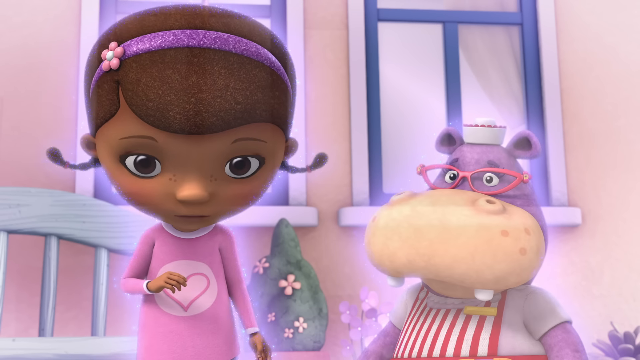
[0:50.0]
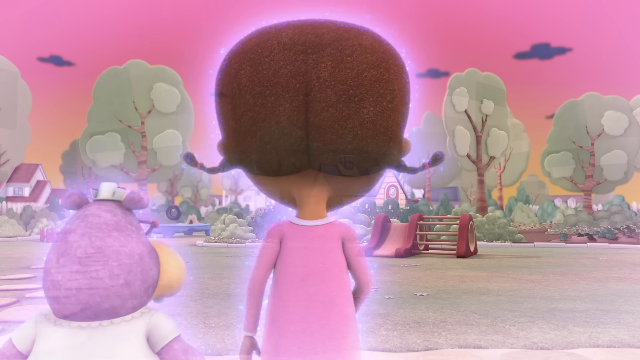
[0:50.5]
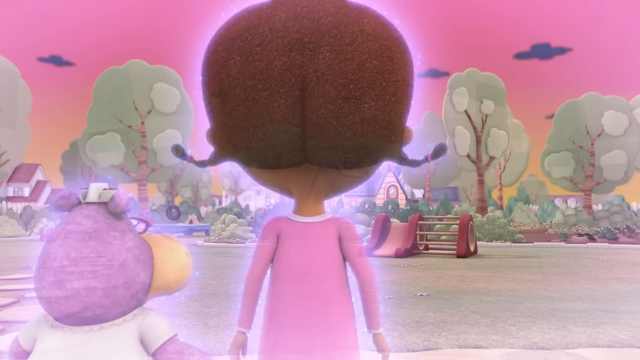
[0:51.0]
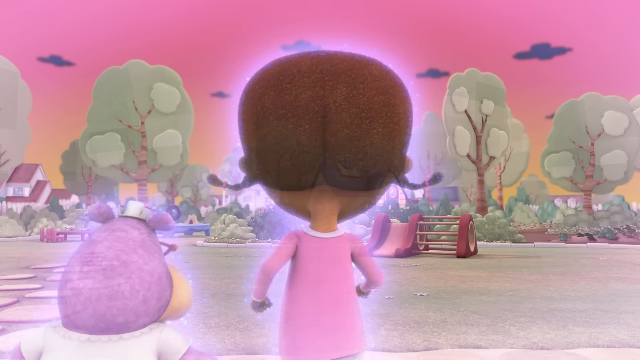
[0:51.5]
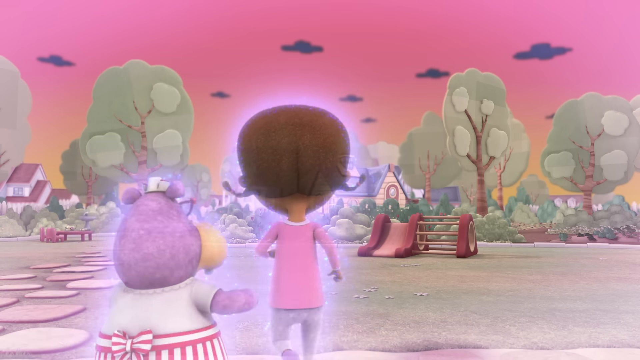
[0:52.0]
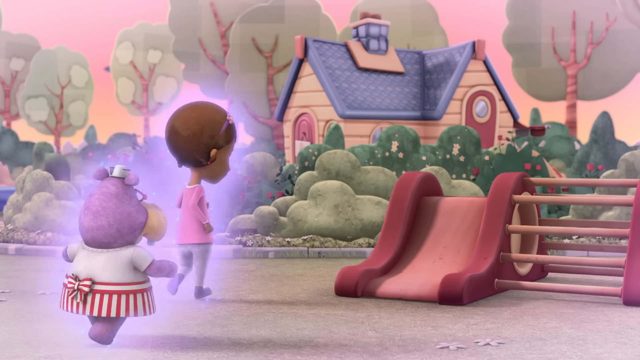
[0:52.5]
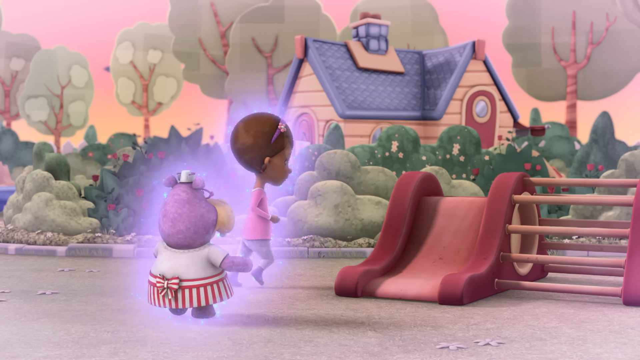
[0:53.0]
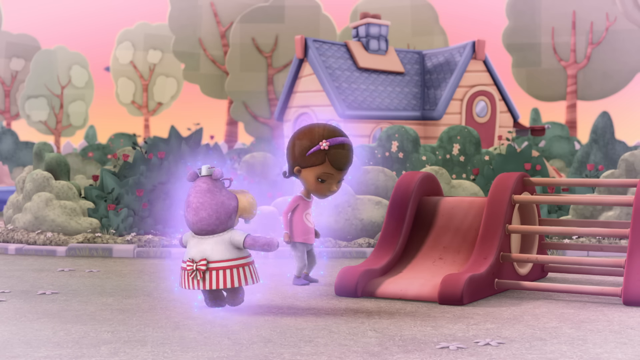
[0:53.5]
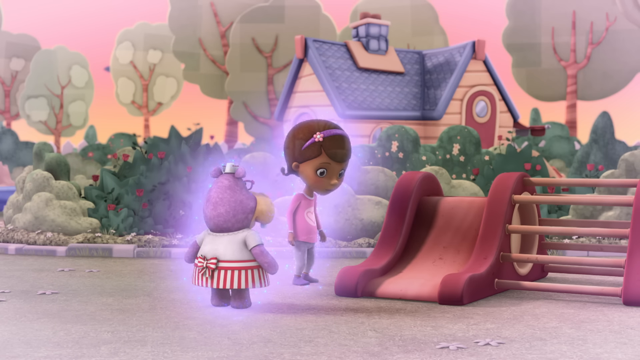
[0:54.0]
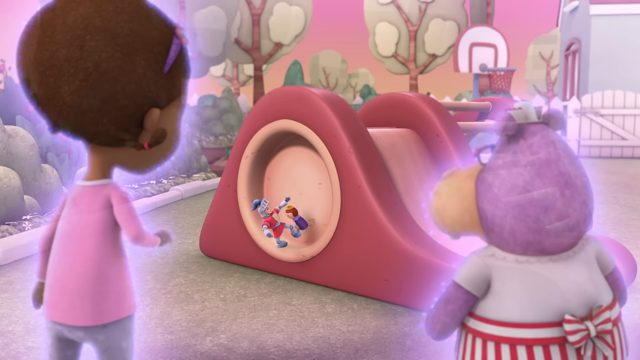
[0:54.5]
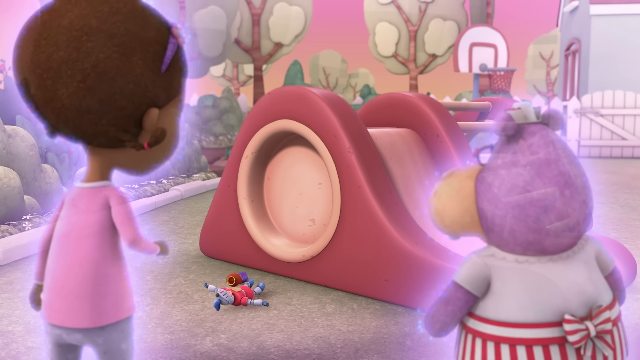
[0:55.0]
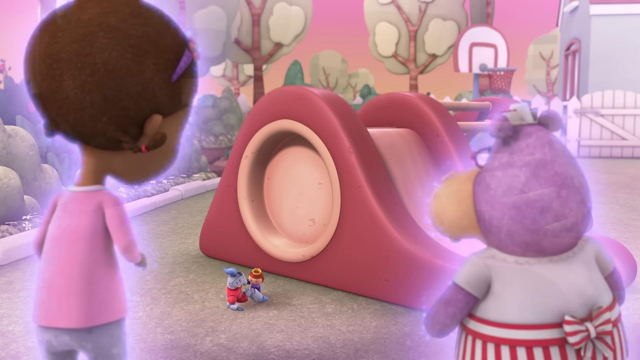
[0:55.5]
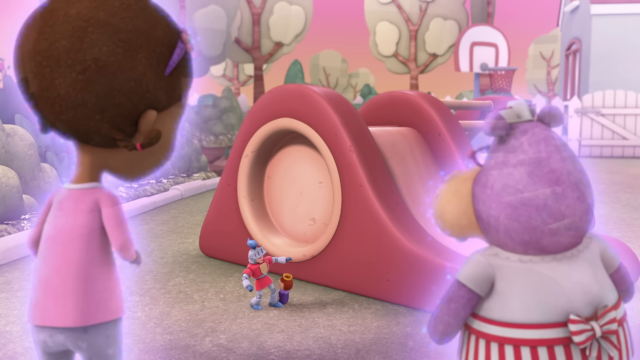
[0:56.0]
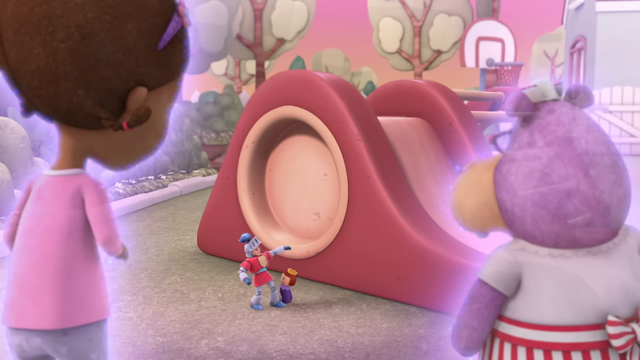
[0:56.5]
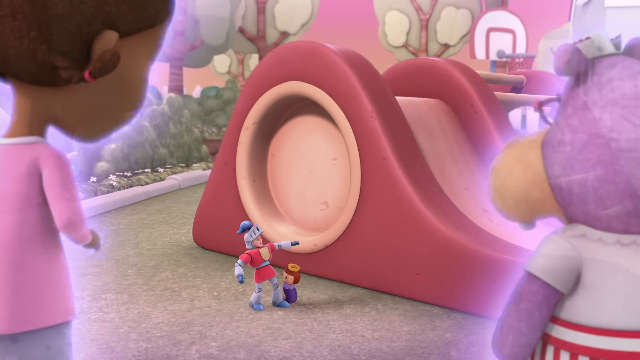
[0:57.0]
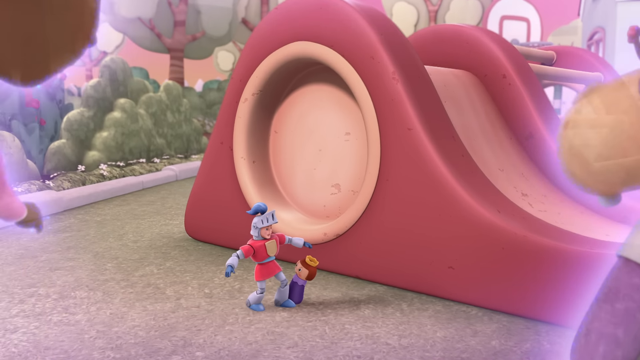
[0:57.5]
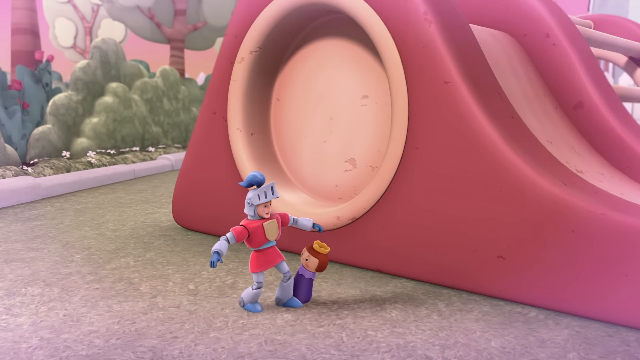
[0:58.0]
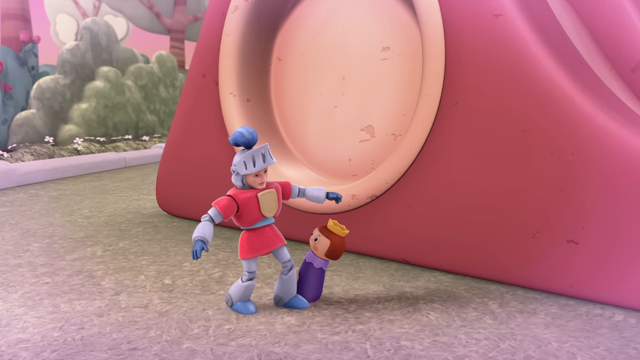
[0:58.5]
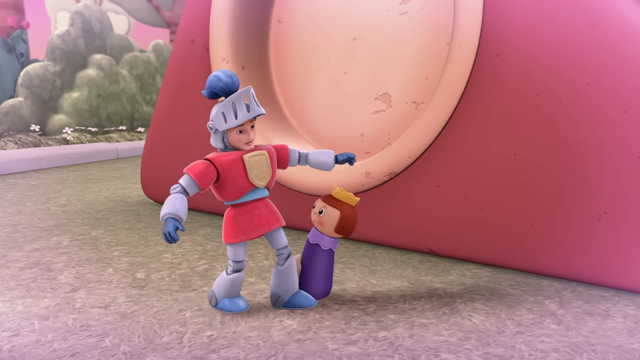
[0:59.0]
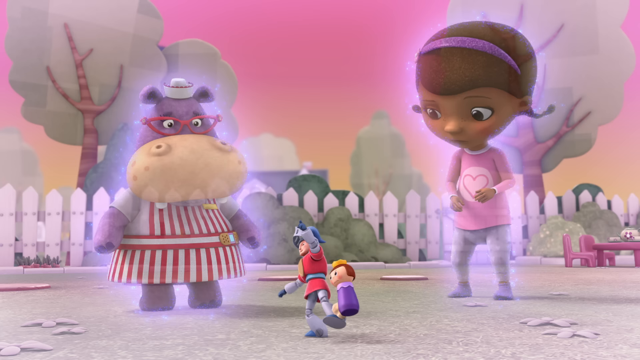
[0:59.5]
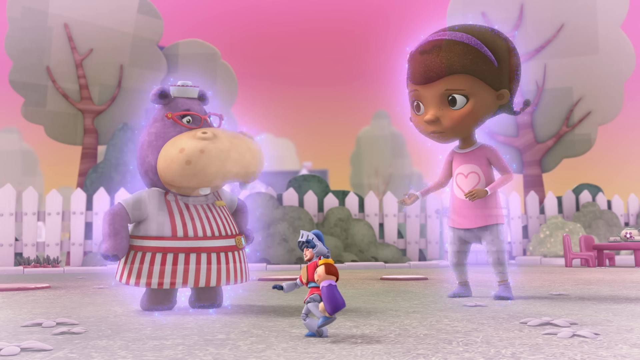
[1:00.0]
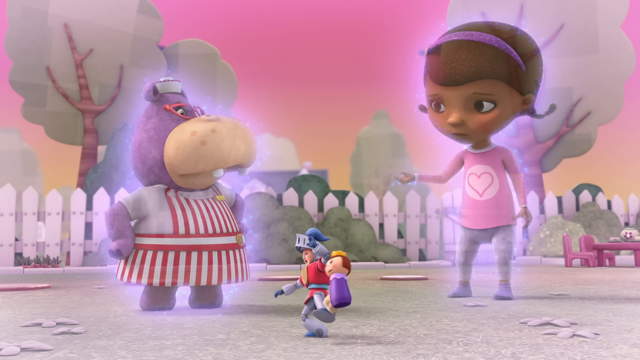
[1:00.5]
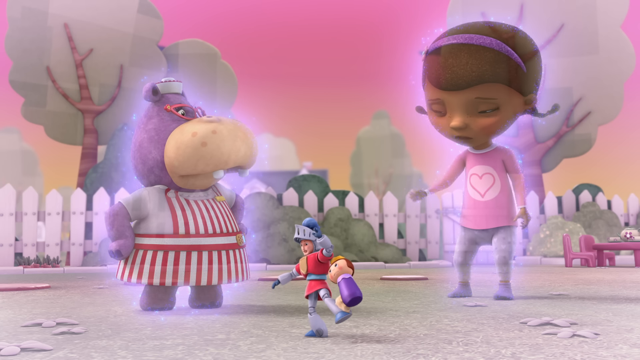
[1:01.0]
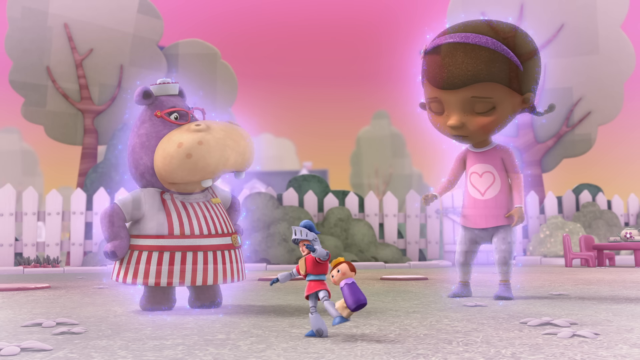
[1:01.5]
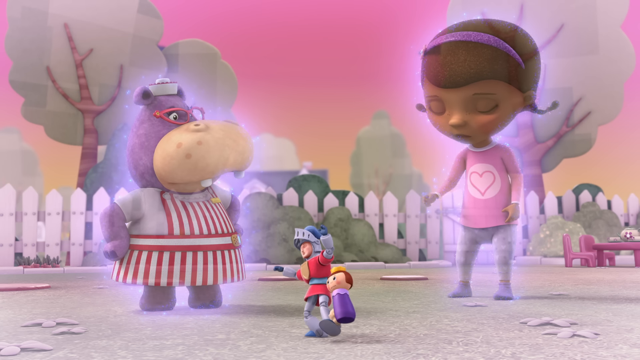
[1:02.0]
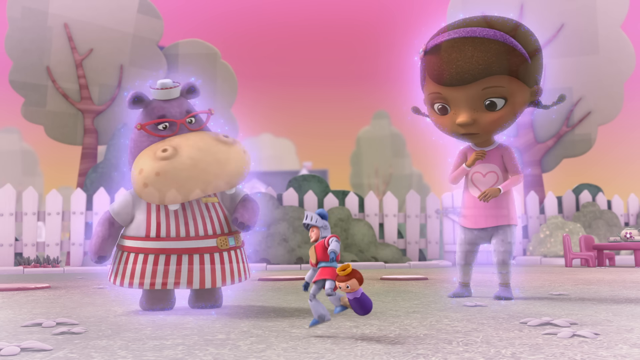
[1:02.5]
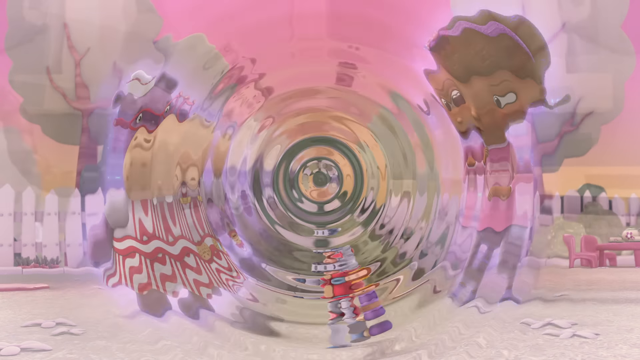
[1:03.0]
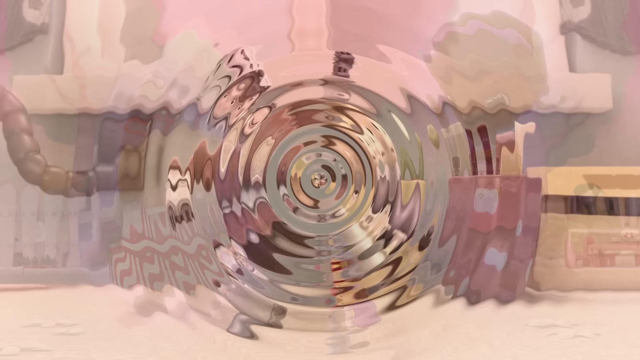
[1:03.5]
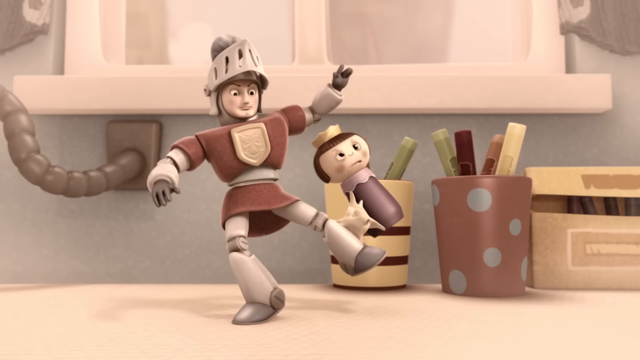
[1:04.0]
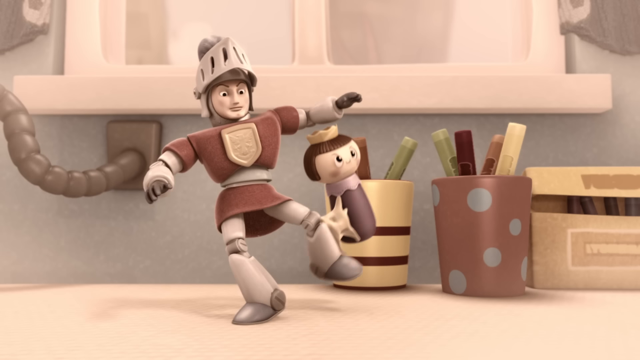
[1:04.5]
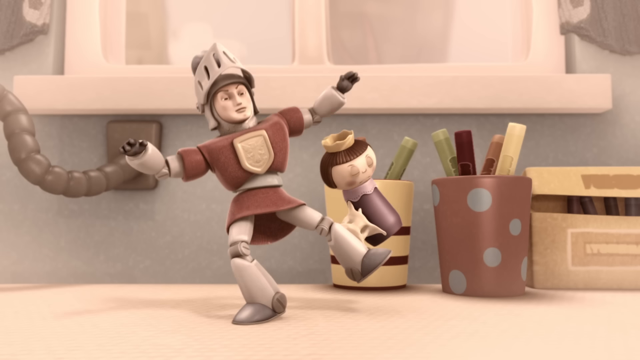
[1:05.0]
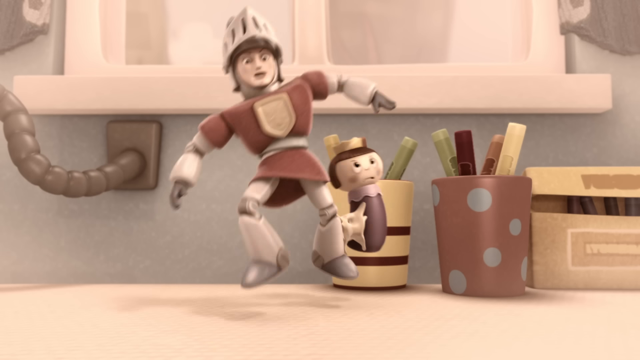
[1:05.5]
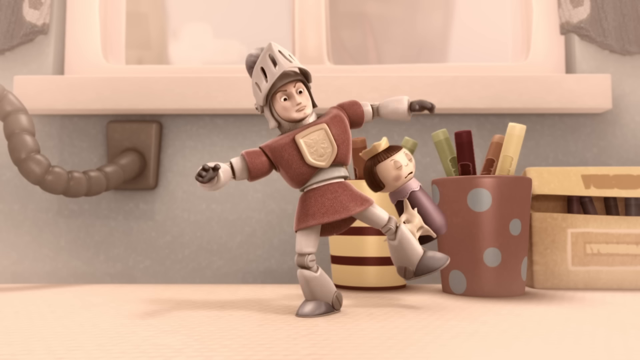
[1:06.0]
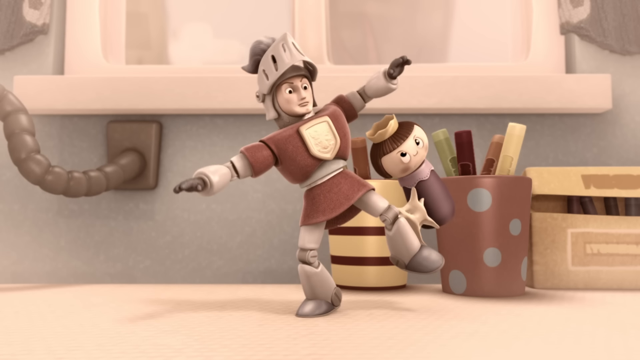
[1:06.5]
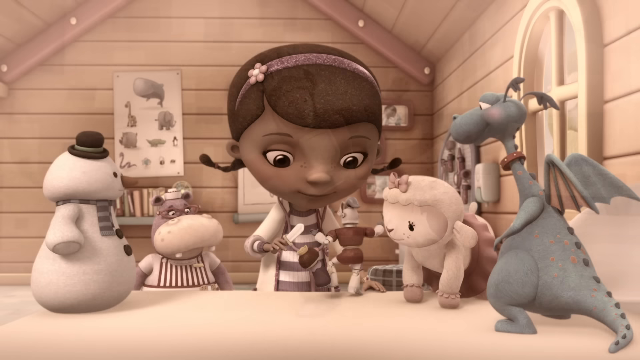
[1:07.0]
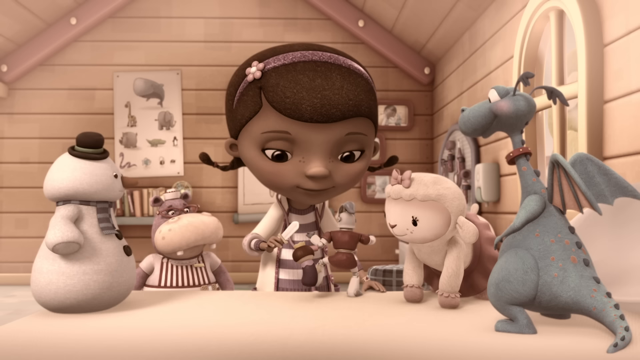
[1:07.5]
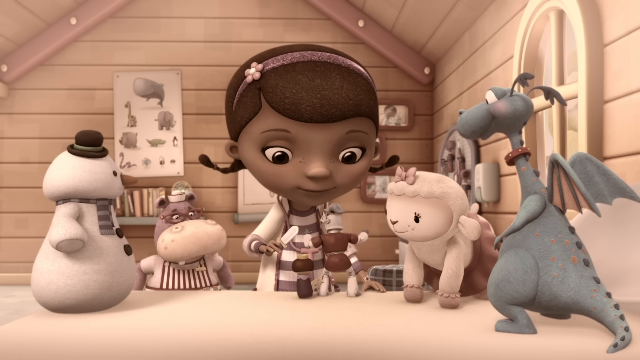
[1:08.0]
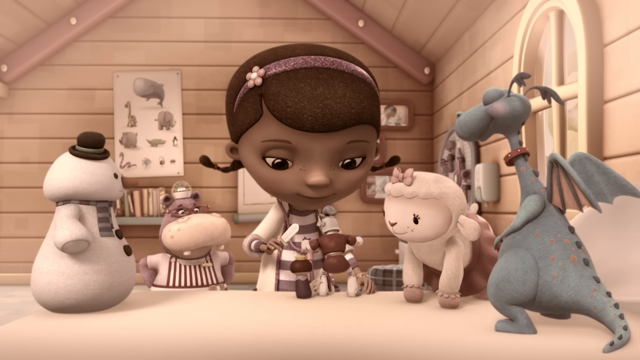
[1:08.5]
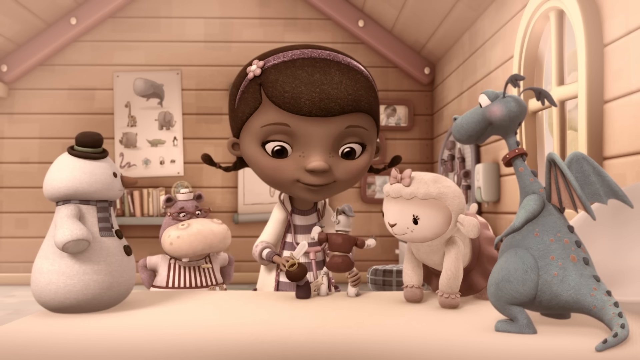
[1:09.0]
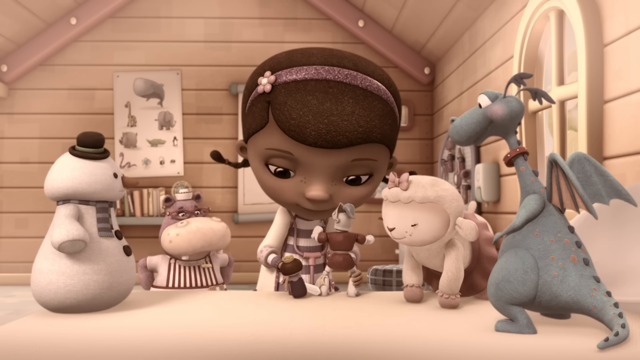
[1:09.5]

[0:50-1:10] Outside, the two are close to the tan, peach-colored house, whose windows have blue trim. The hippo wears red glasses and a red and white outfit. The little girl wears a pink outfit, sleepwear, and has a purplish hair ribbon in her brown hair. There are a couple of flowers and a flower pot in the background. A back view of the two follows. The sky is purplish and yellowish, with clouds that look like Chevy symbols or UFOs, and there are green trees. There is a playground-looking area with a slide and possibly a fun house. Little animated creatures, very small, maybe a foot tall, look like Lego or some type of 80s toy. Another view shows the purplish-yellowish sunset and a white picket fence. A close-up shows these animated toys in a different color setting with a lot of tan brown; they look like they are on a shelf. There is a yellow and brown and gray spotted cup holding what might be crayons, gray walls, a wire going into the wall, and a little bit of a cabinet door.